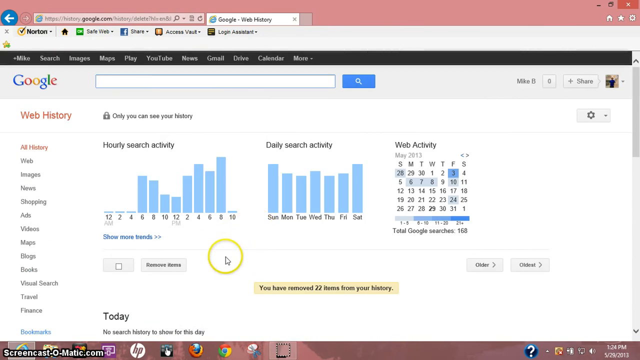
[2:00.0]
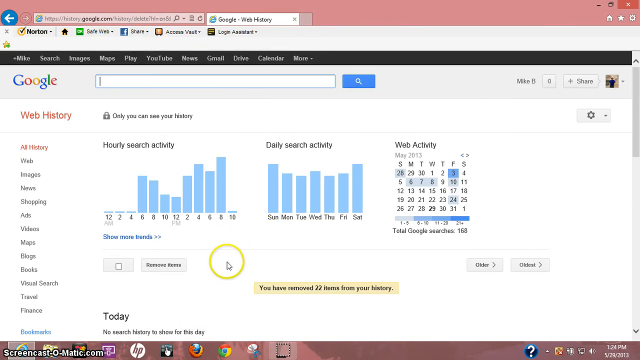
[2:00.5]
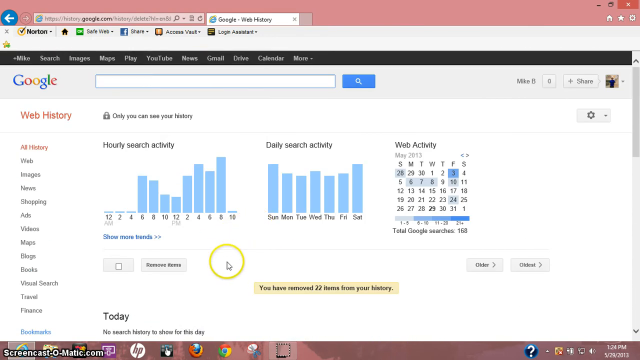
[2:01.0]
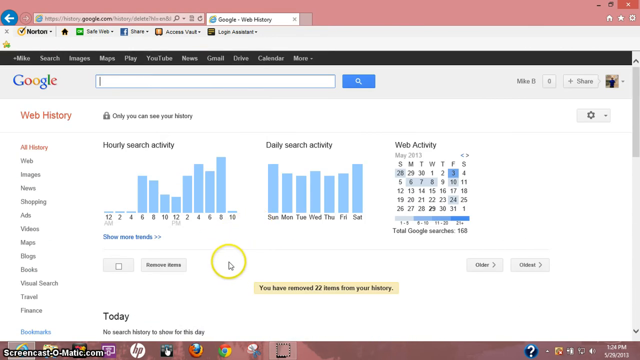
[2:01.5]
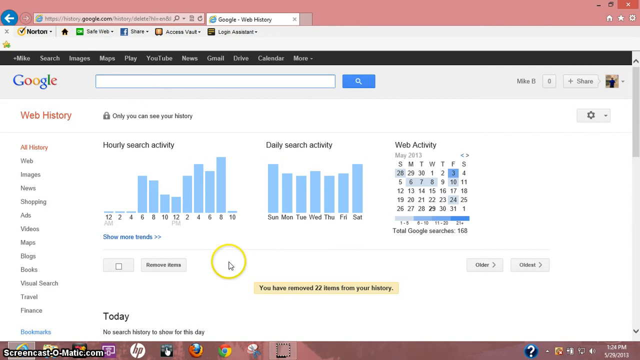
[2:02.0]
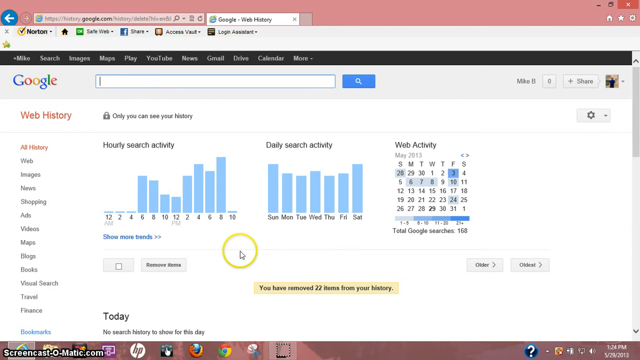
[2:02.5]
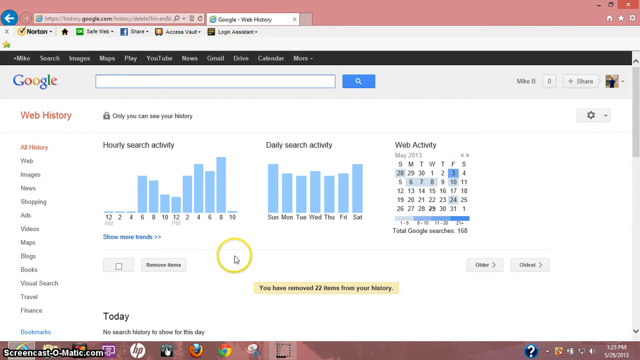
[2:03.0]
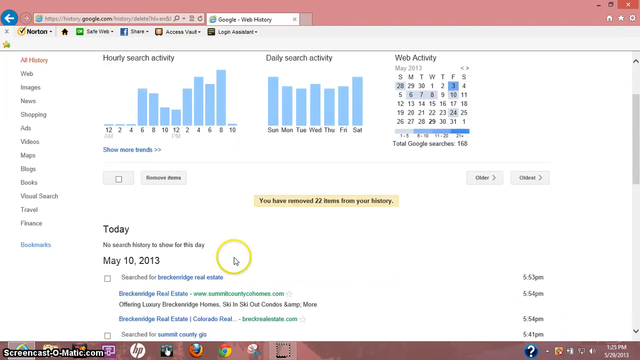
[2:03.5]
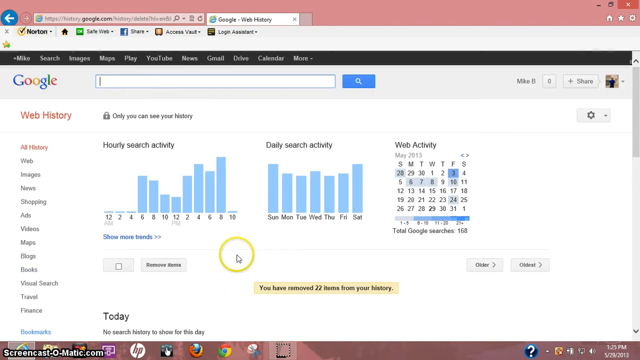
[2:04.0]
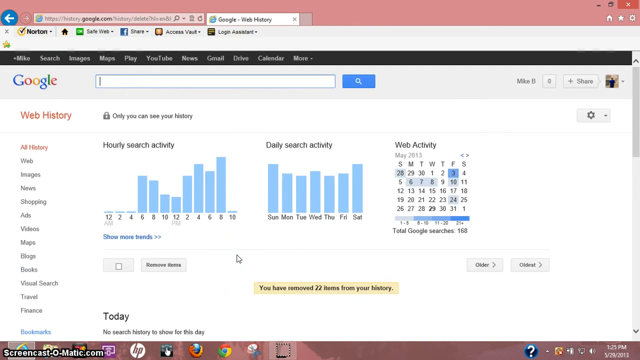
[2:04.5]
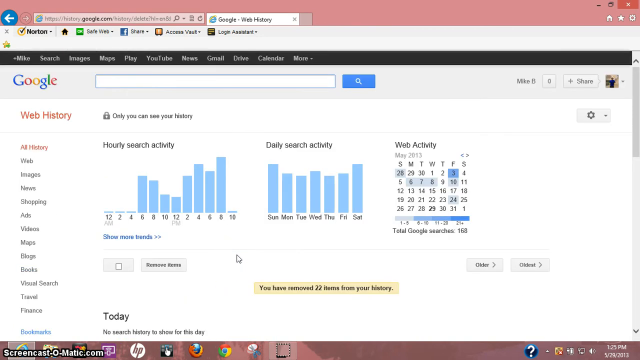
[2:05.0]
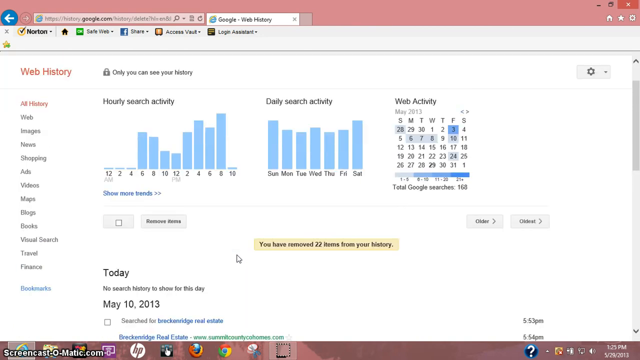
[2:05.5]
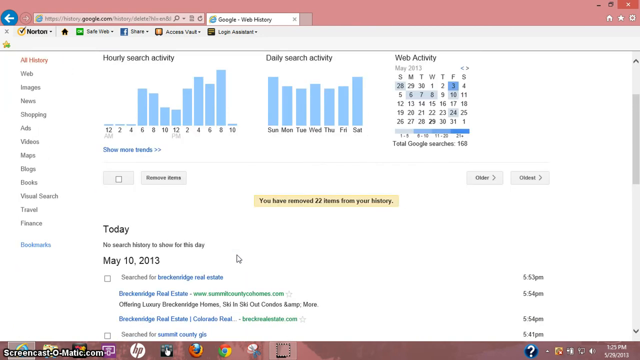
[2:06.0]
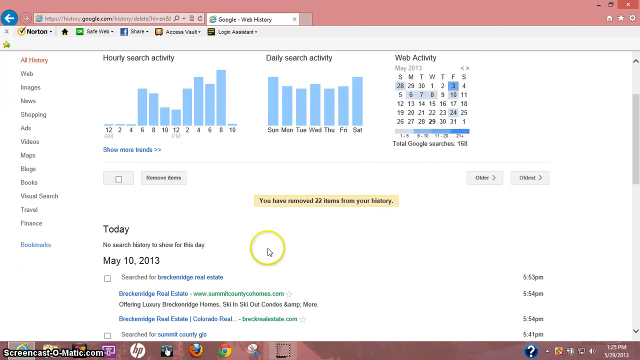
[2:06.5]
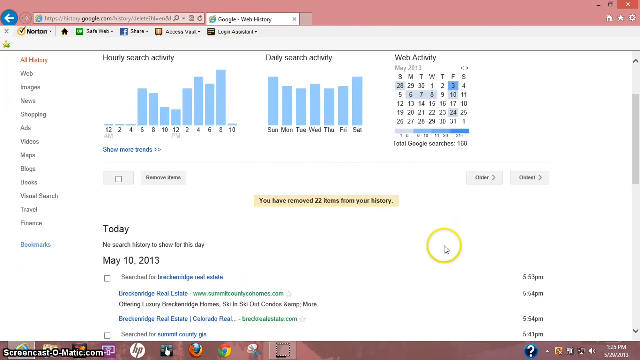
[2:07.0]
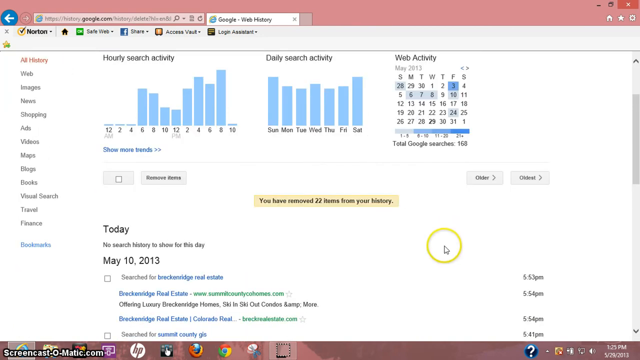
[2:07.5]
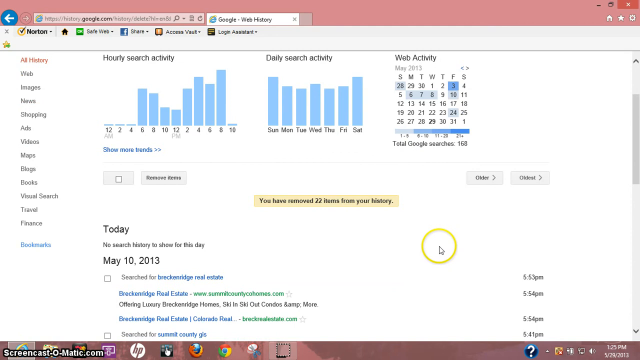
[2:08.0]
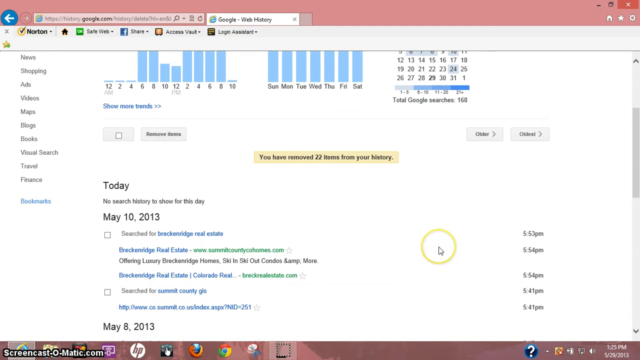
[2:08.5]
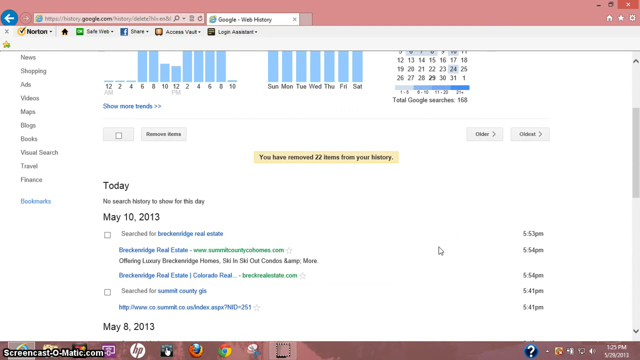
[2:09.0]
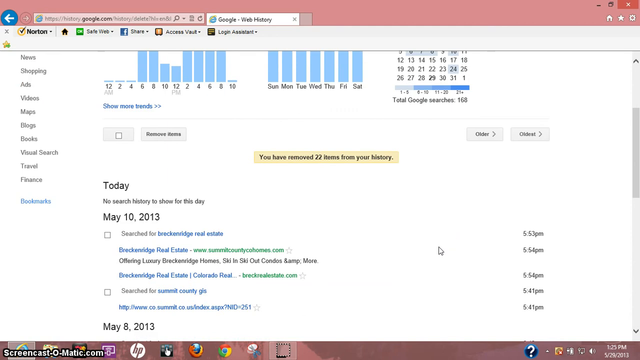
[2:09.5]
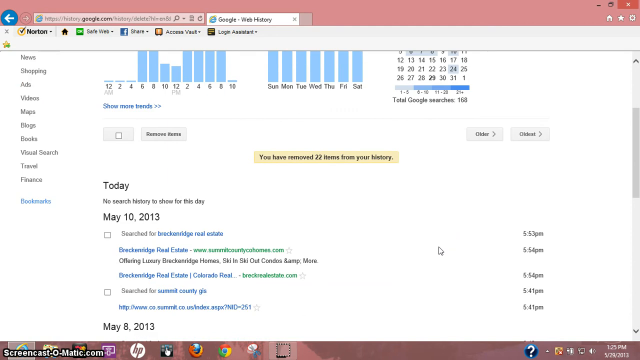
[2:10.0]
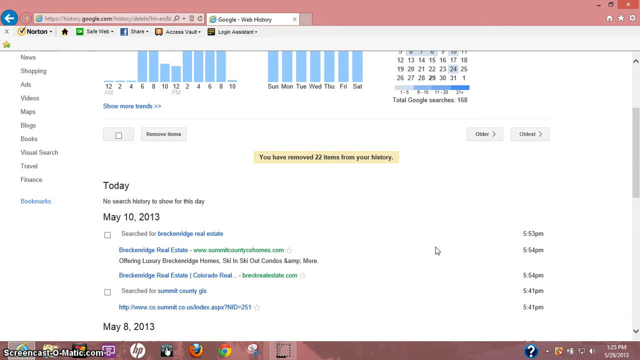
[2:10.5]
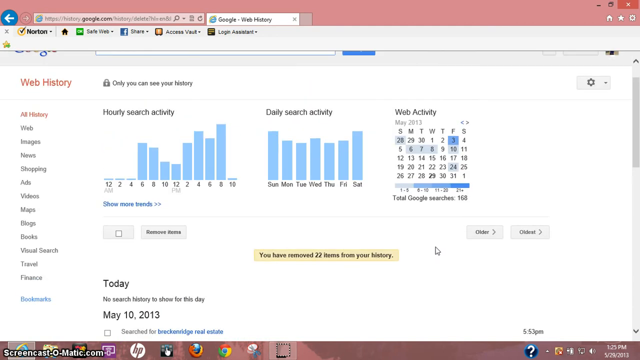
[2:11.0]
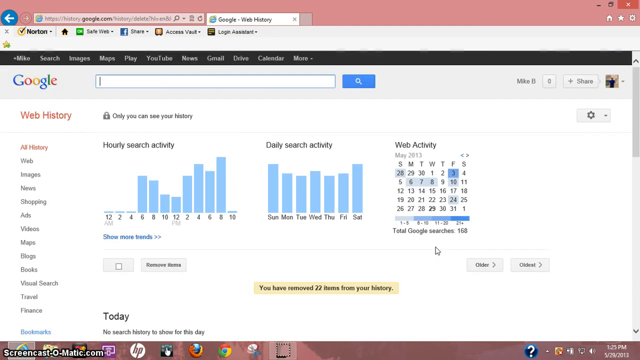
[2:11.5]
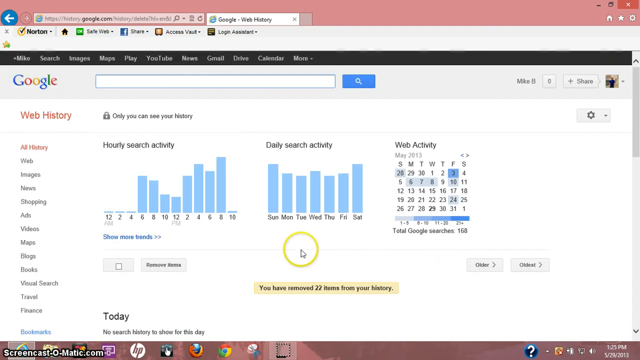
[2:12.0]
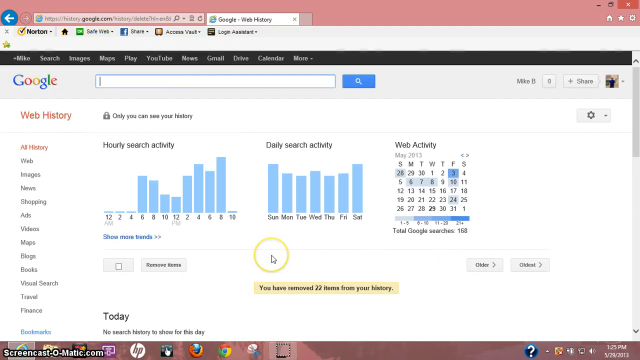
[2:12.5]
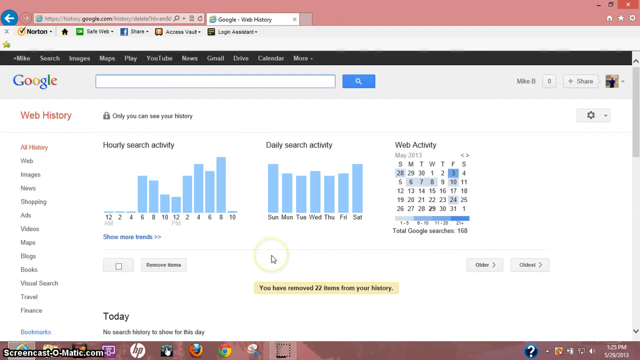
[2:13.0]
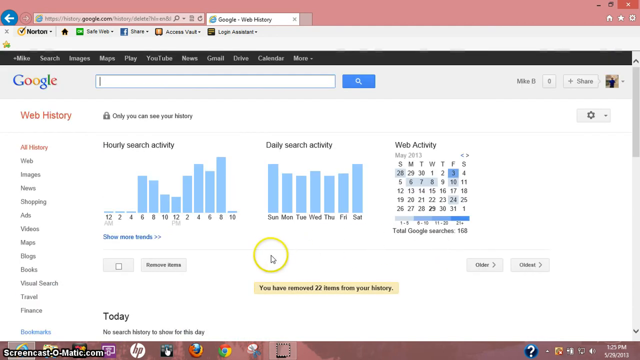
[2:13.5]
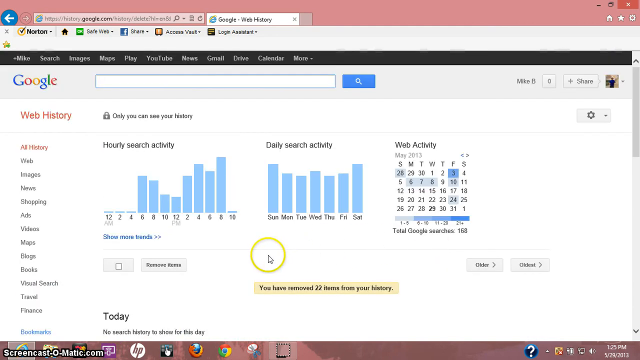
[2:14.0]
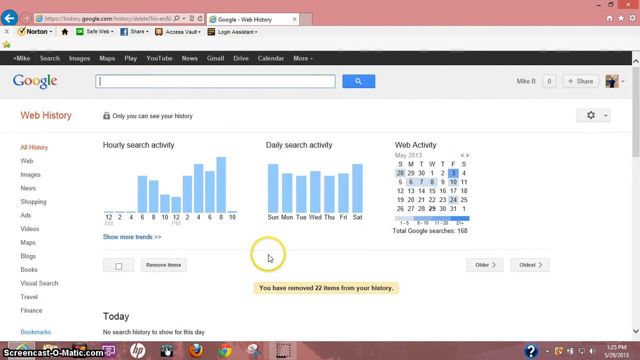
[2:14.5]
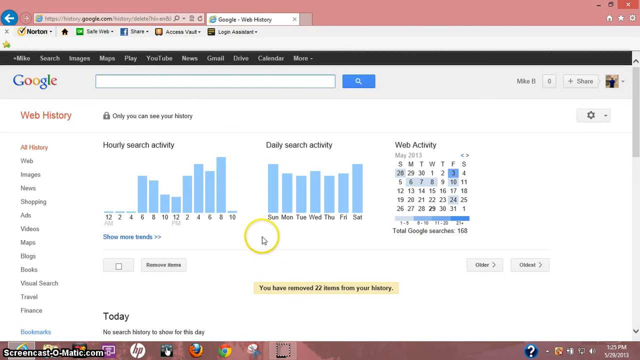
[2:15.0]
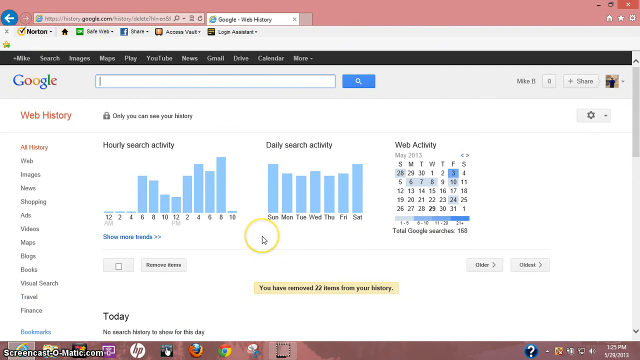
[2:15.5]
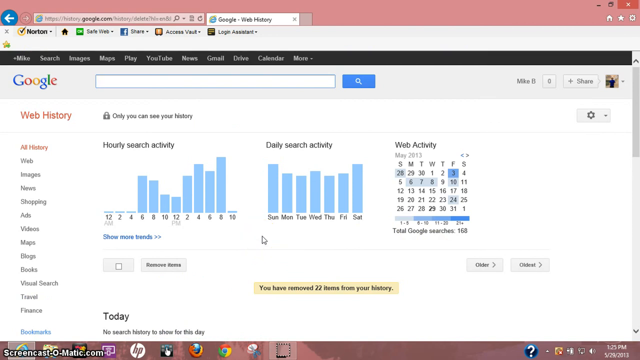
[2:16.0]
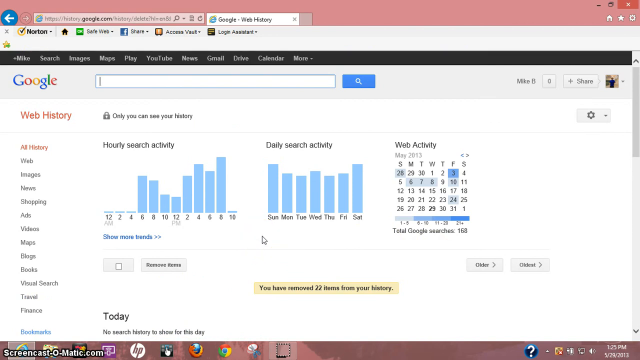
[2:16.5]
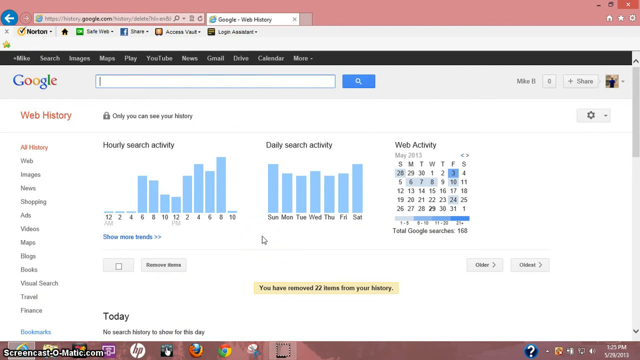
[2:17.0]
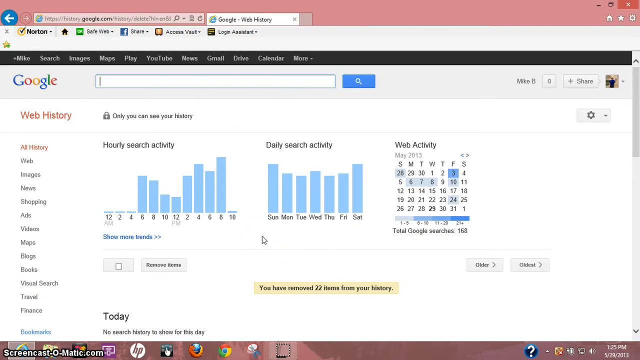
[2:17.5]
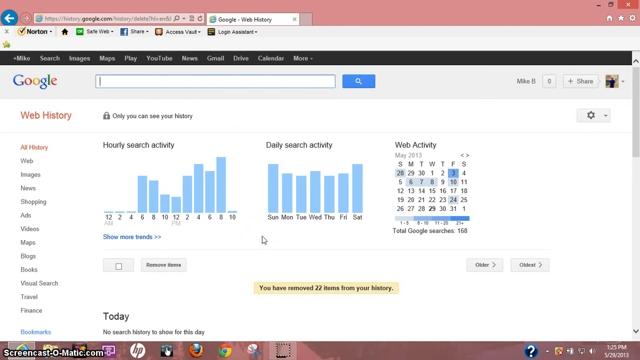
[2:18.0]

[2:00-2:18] A Google history web page shows "web history" on the left side with many categories running vertically down. Three charts are at the top of the page. At the very top it says "only you can see your history", then "hourly search activity" with a graph, "daily search activity" with a graph of Sunday through Saturday, and "web activity" with a calendar underneath. At the very top is a Google search bar, and above it the browser with a back button. A mouse pointer with a yellow circle around it moves a little, scrolls down, goes back up to the top, scrolls down a little, and moves to the right of the screen. In the center of the screen, "you have removed 22 items from your history" is highlighted in a yellow rectangle. The pointer goes back up to the top of the screen, the circle around it fades a little, comes back into view, and then disappears completely, and the cursor stays in one place.